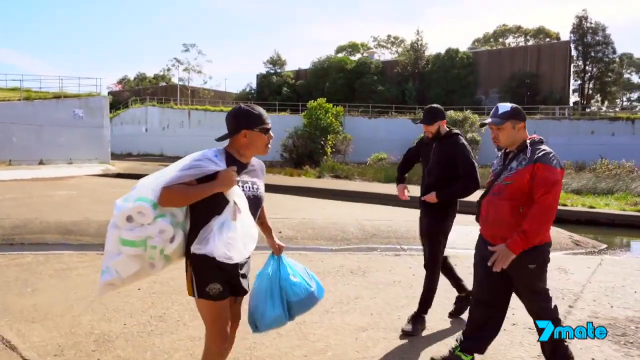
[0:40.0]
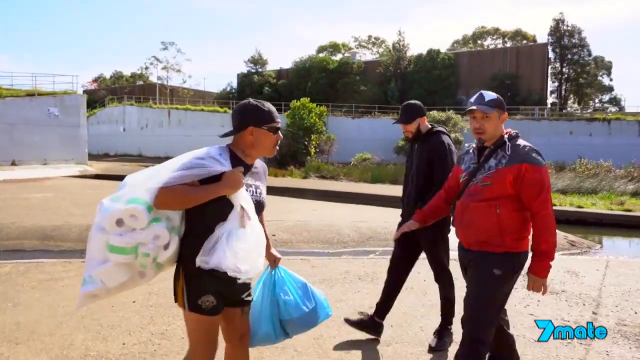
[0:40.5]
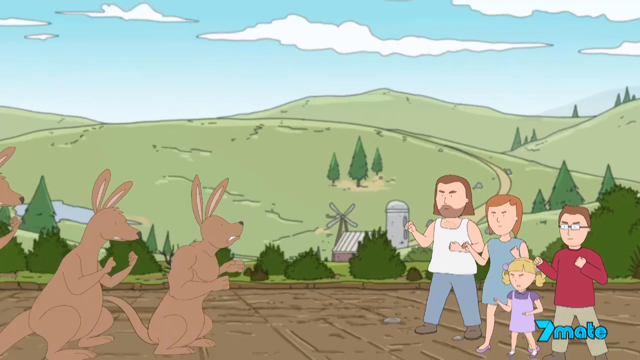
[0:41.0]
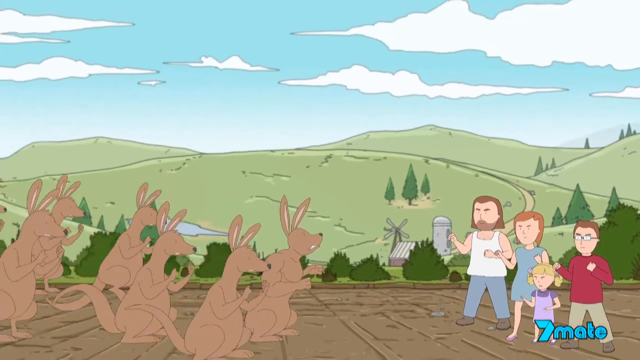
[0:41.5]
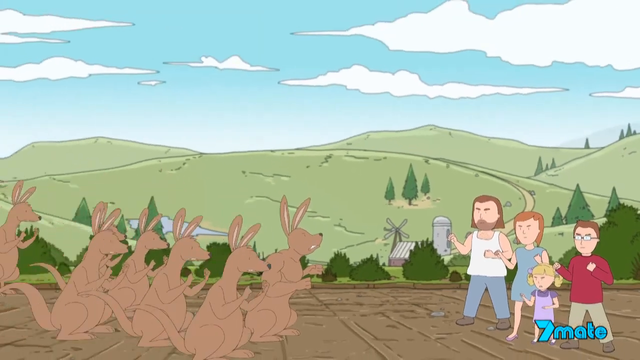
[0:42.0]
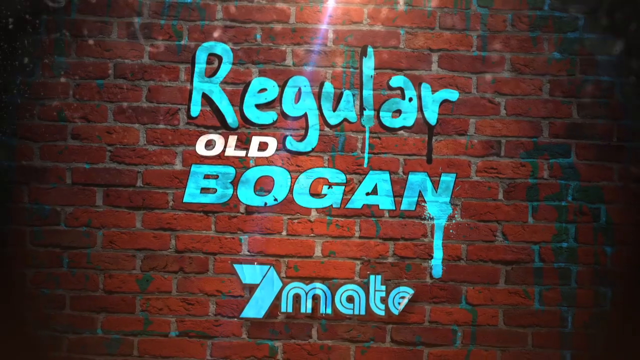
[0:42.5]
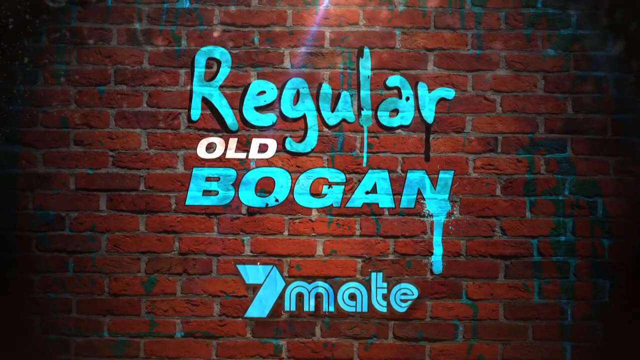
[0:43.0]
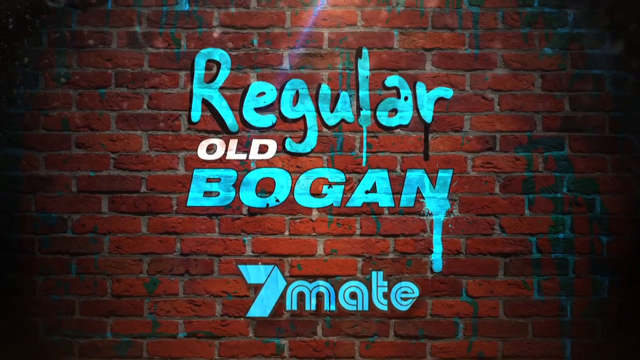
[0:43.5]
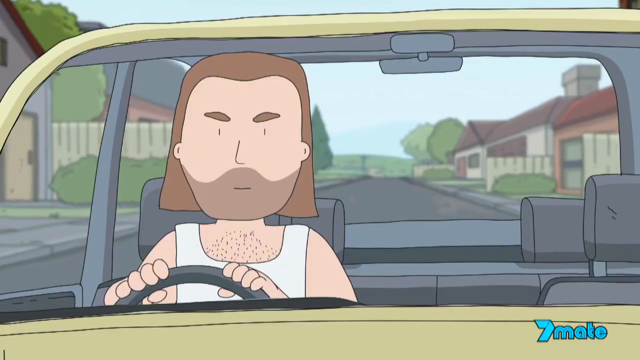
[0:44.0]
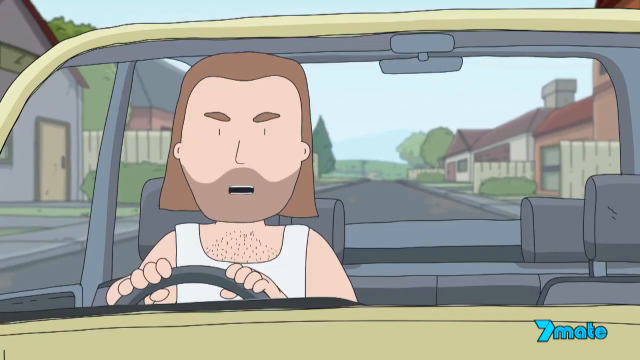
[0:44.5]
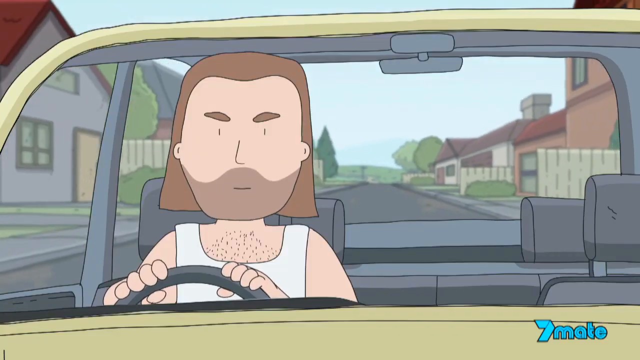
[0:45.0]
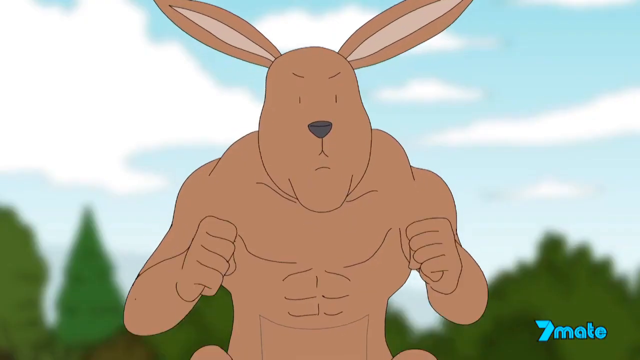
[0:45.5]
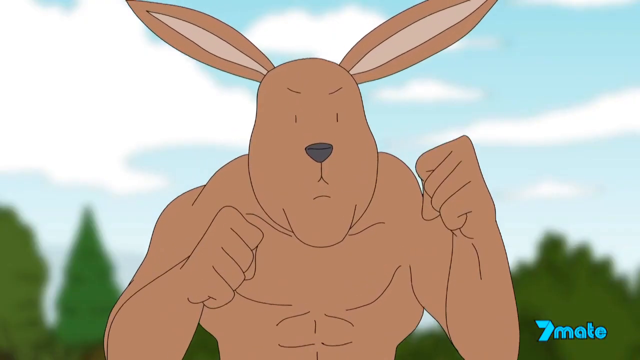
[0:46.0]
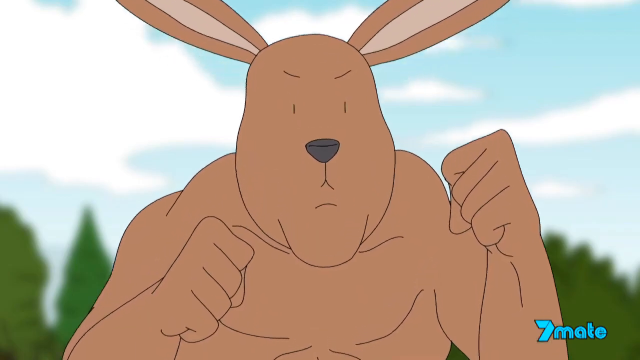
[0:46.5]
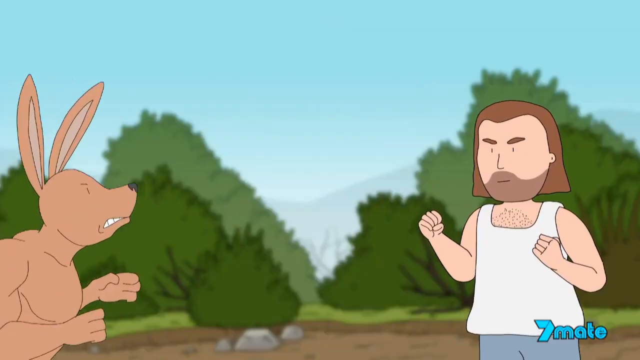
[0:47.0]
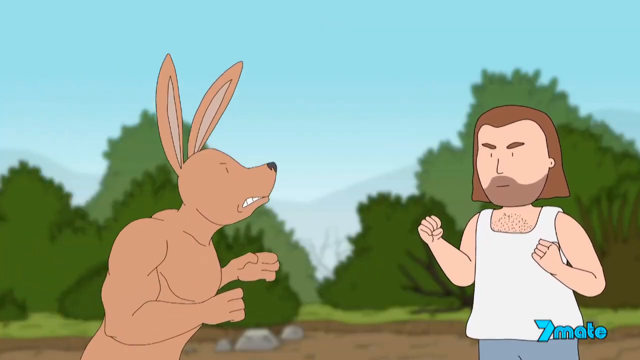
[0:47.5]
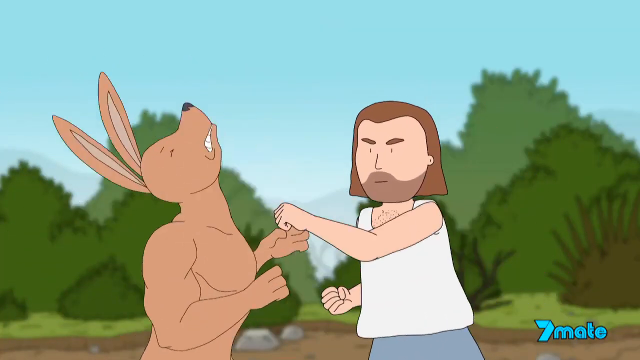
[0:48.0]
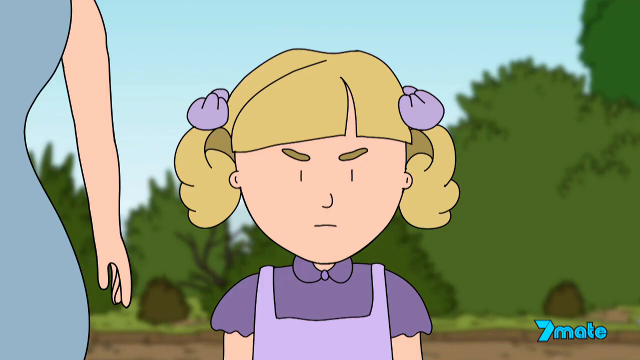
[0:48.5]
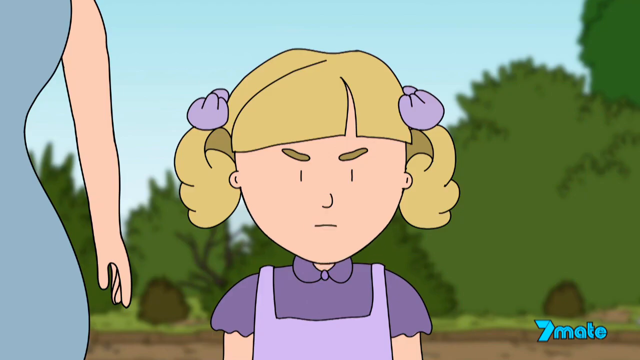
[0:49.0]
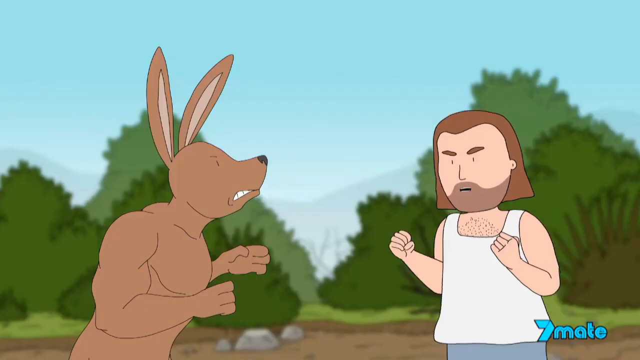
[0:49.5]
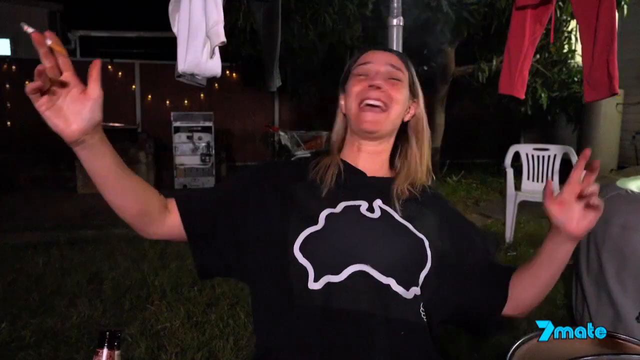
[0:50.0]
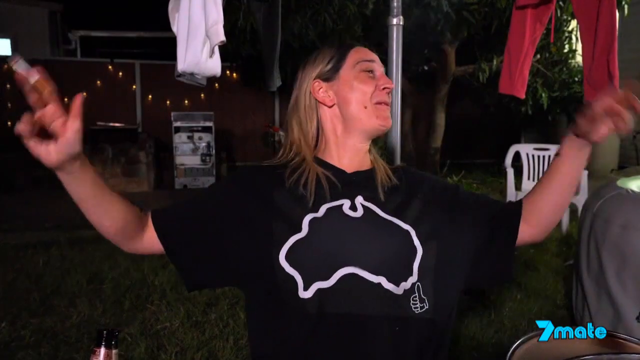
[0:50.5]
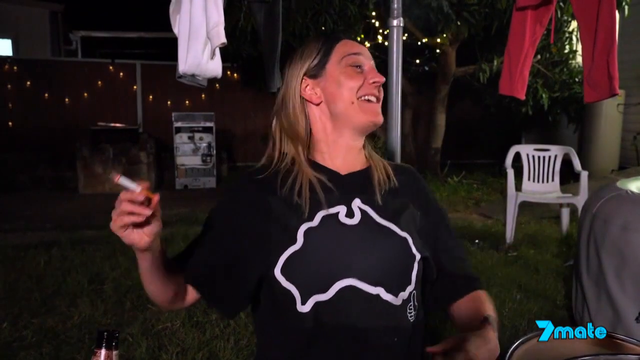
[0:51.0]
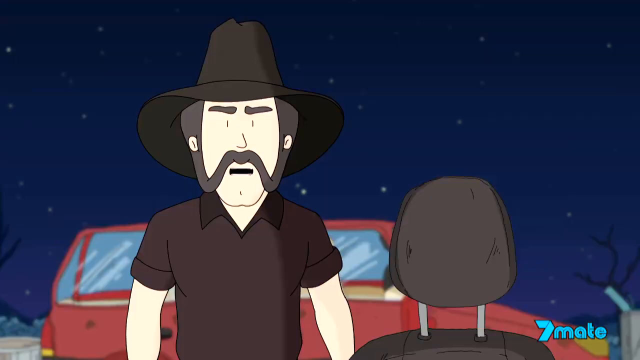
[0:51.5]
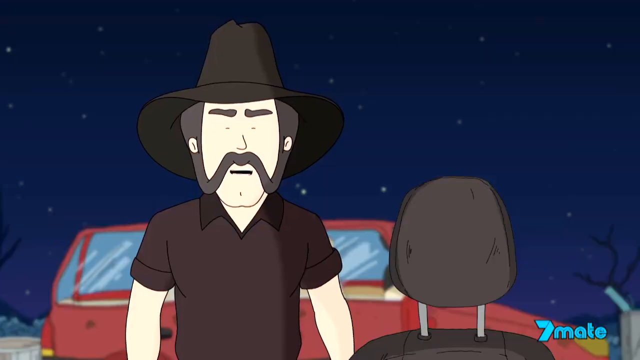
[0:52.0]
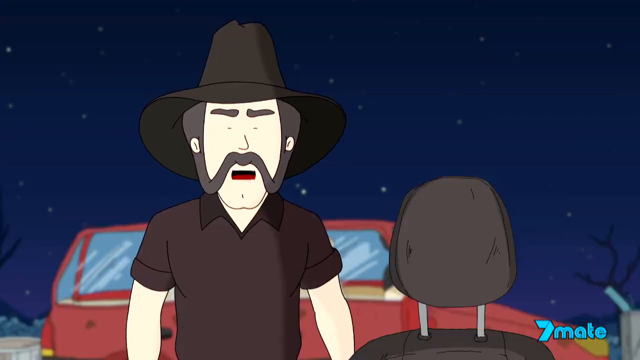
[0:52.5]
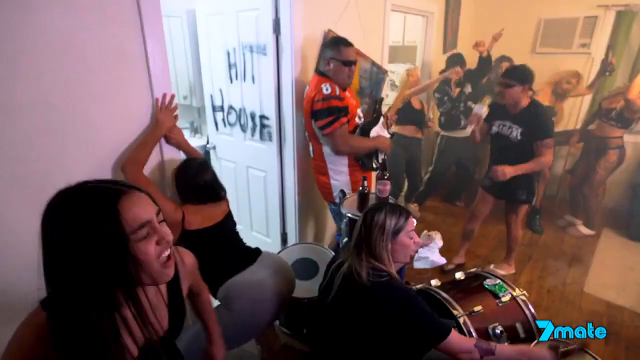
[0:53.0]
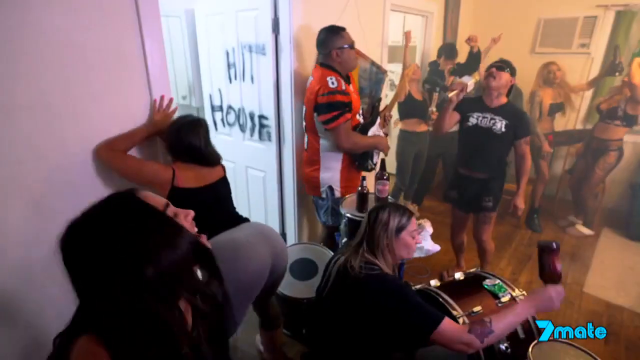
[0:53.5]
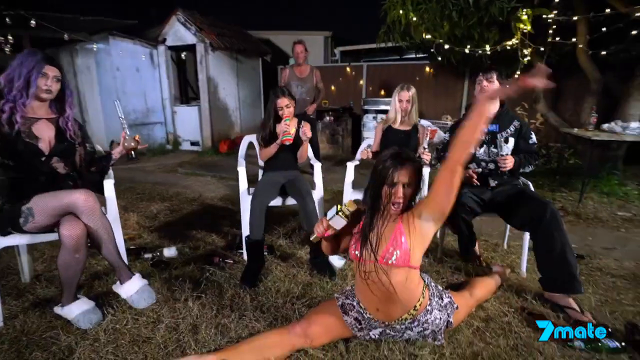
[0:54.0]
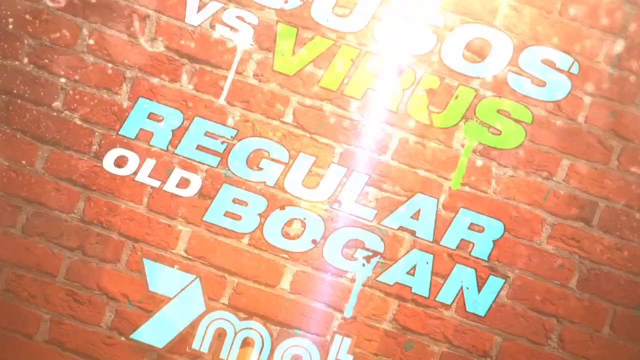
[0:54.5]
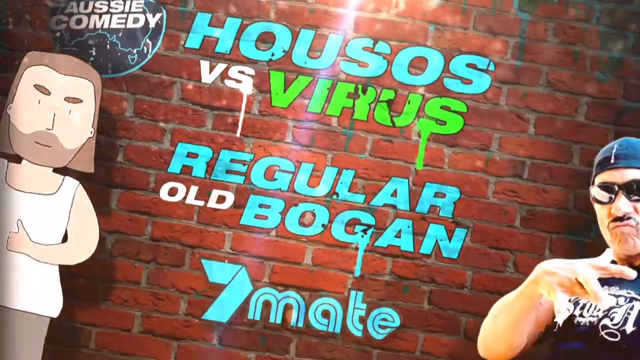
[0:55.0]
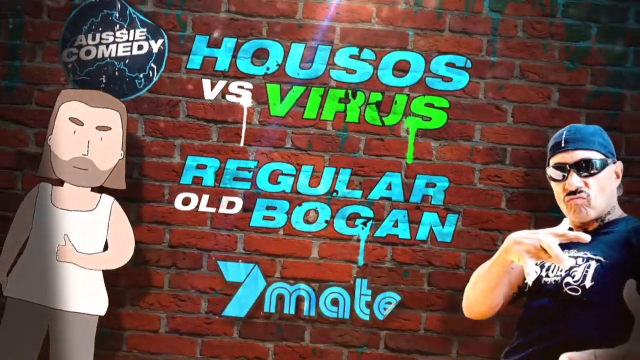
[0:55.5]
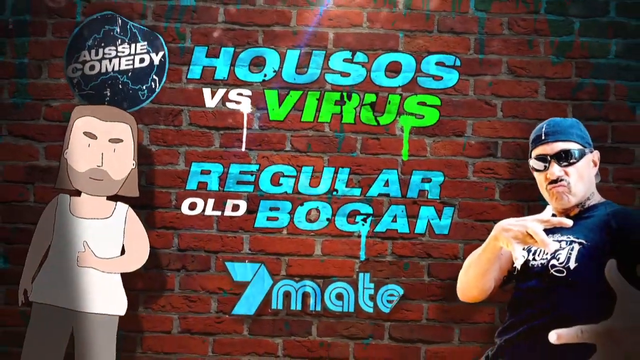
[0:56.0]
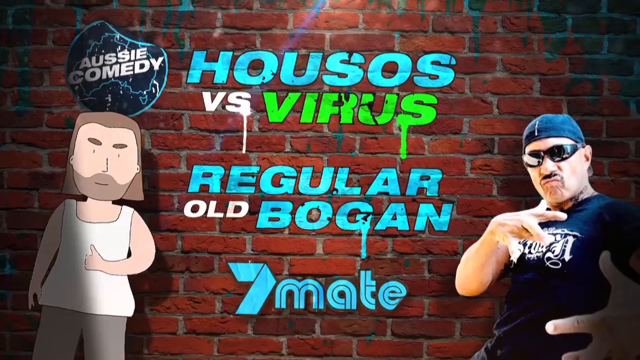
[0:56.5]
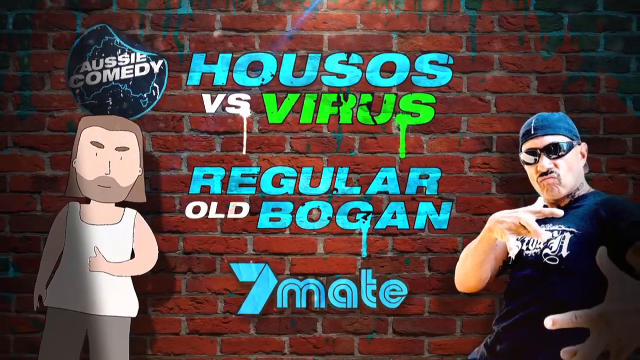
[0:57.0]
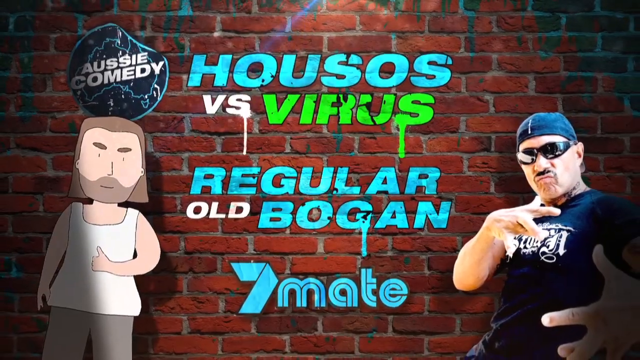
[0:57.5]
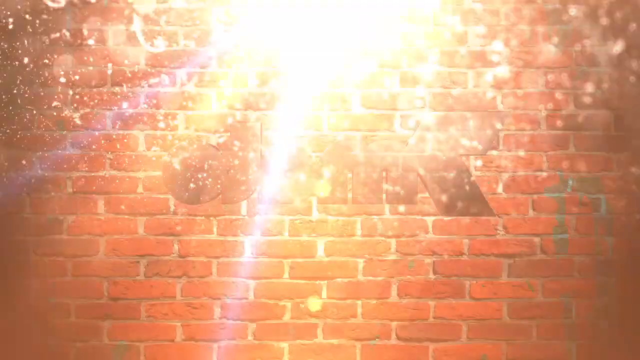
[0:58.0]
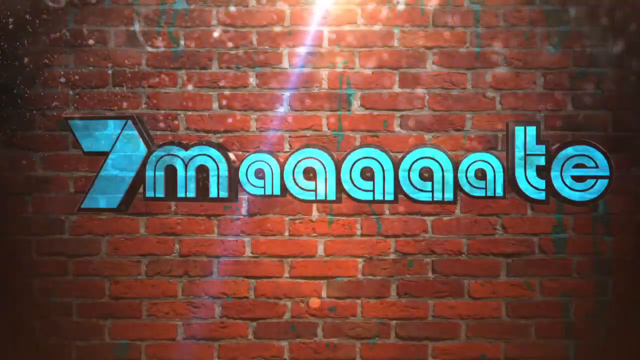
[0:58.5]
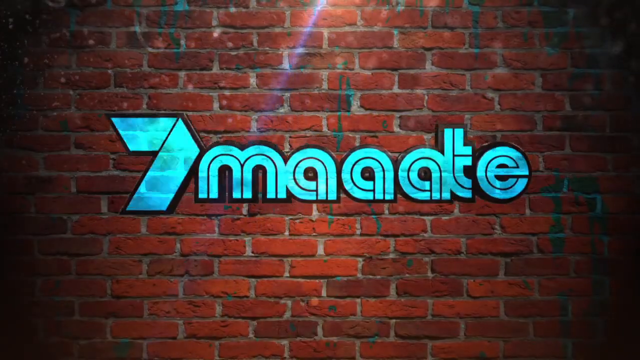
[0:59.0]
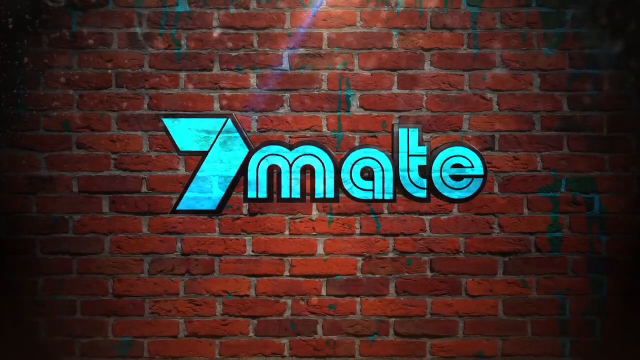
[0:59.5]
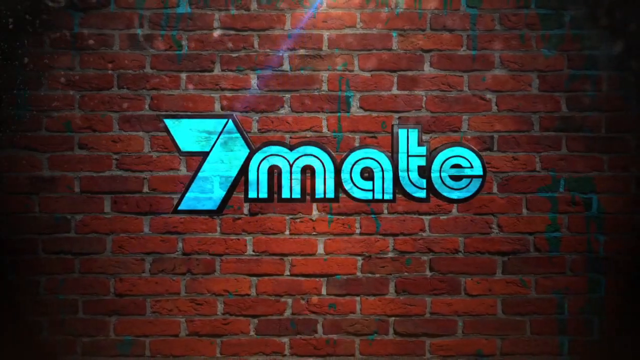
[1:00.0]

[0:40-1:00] The two men approach the guy holding the toilet paper. The scene fades to the cartoon man pushing the IV, who stands beside a woman with red hair in a blue dress, a small blonde-headed child, and a boy in a red shirt. They all hold up their fists toward a very muscular kangaroo. Multiple kangaroos move into the screen, five of them facing the family of four, in a cartoon countryside setting. Next is a brick wall with the sign "Regular Old Bogan, seven mate." The cartoon man drives the car, with the word "censored" on screen. A raccoon and a man are boxing. The young blonde-headed girl says something in the cartoon. A party scene follows, where a woman dances holding a cigarette. A new cartoon man with a beard and mustache but no hair on his chin is apparently talking. The video then flashes to the house with all the men and women: a woman plays the drums, the guy in the jersey plays the guitar, and the others dance. It ends on the brick sign reading "Housos versus Virus. Regular old bogans, seven mate."